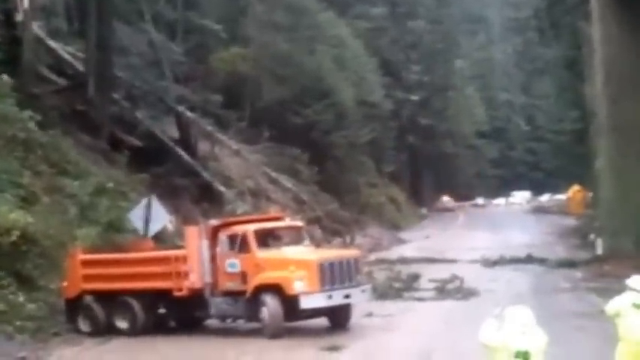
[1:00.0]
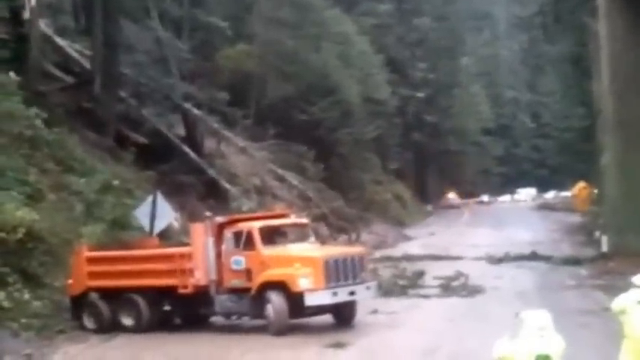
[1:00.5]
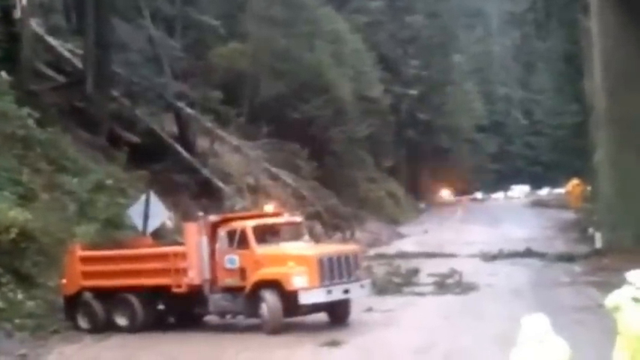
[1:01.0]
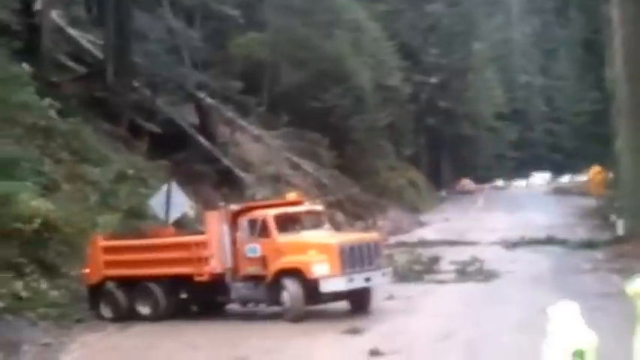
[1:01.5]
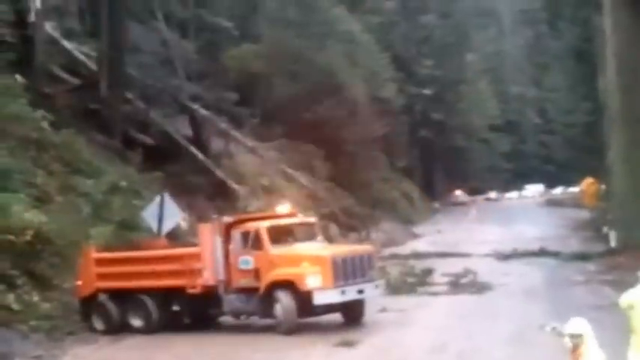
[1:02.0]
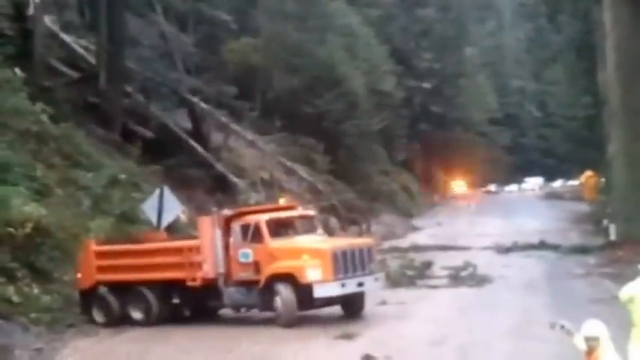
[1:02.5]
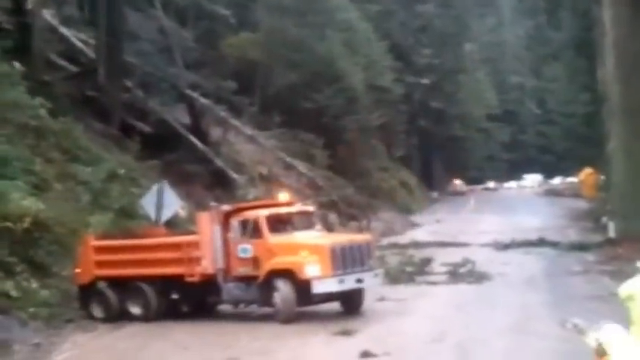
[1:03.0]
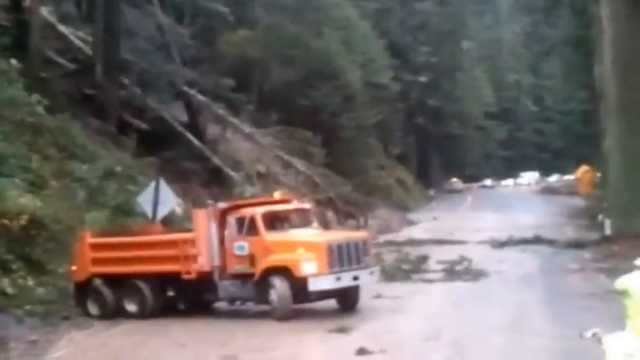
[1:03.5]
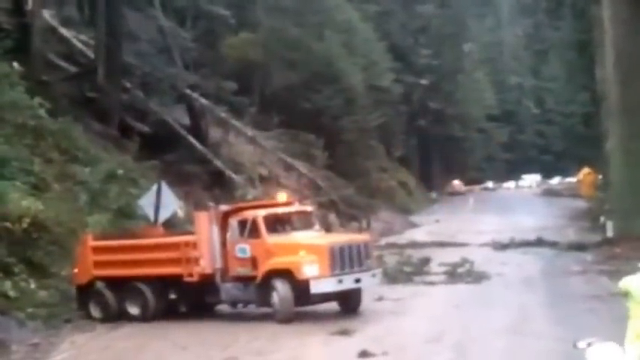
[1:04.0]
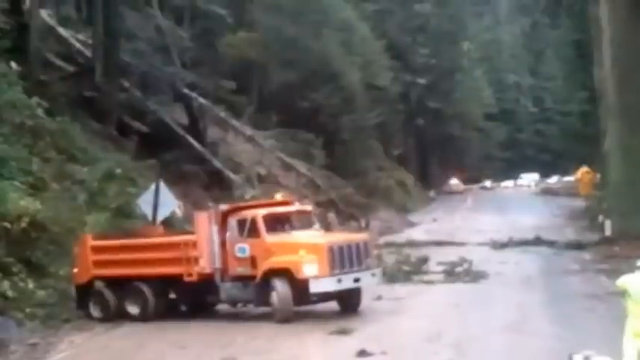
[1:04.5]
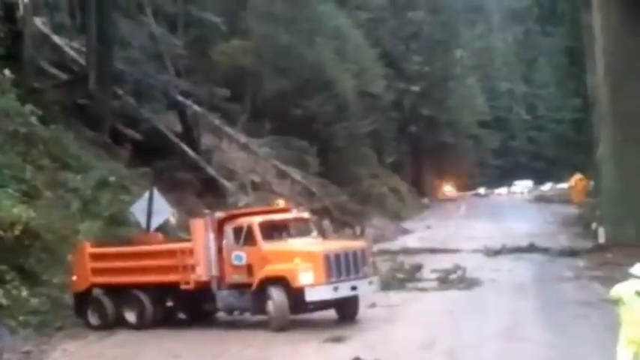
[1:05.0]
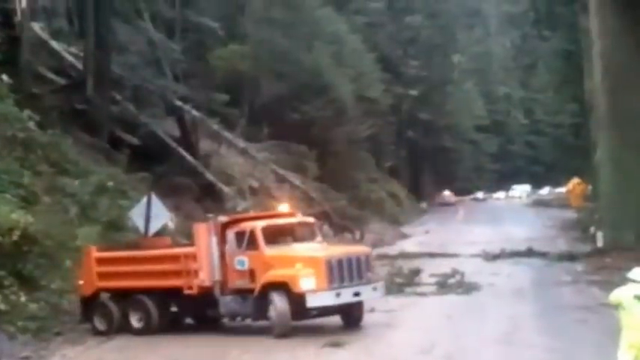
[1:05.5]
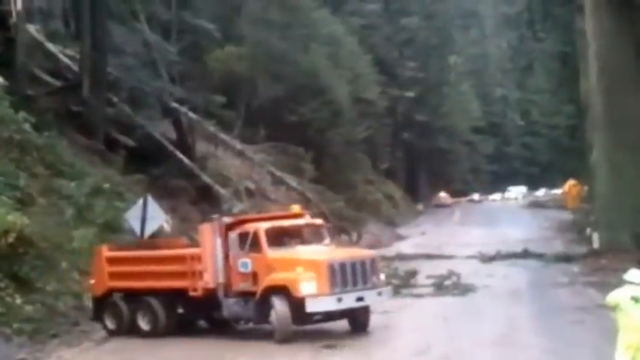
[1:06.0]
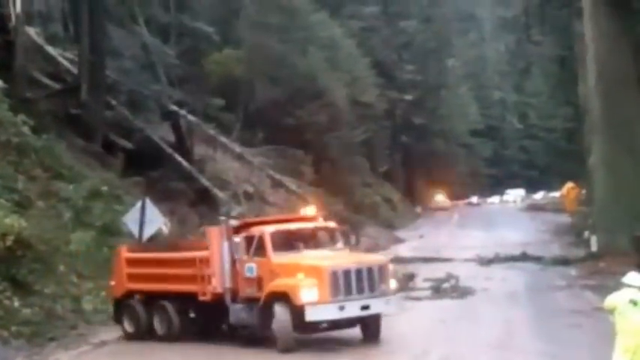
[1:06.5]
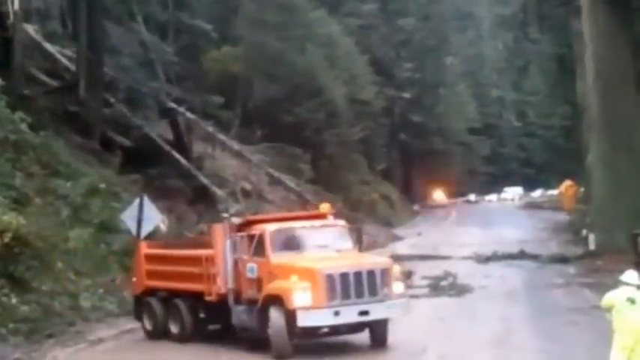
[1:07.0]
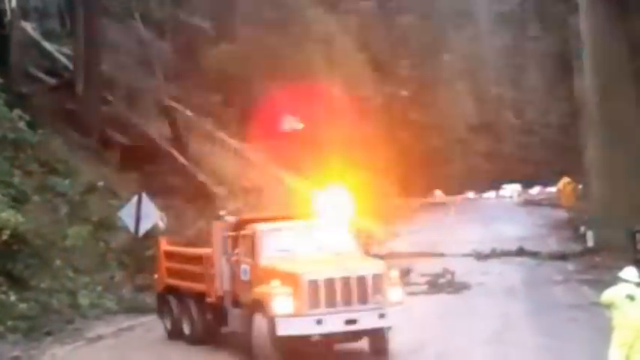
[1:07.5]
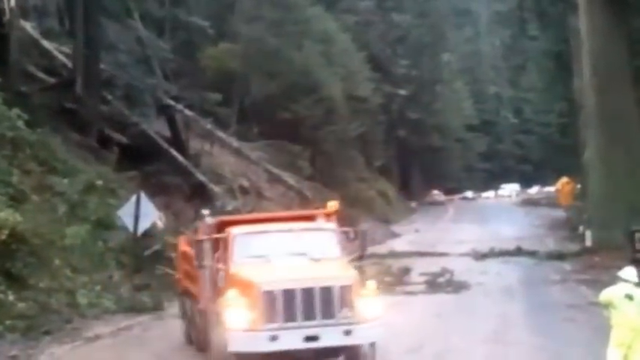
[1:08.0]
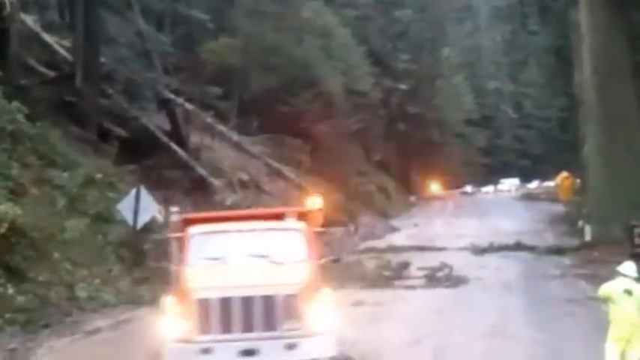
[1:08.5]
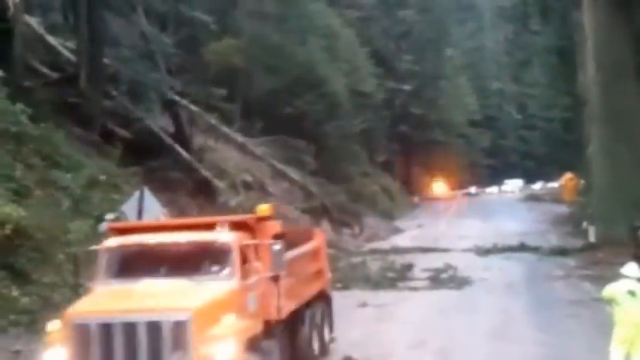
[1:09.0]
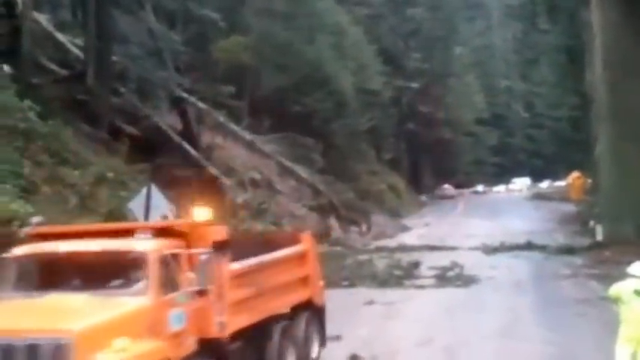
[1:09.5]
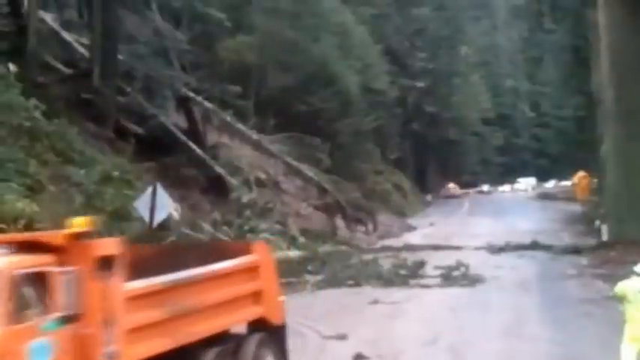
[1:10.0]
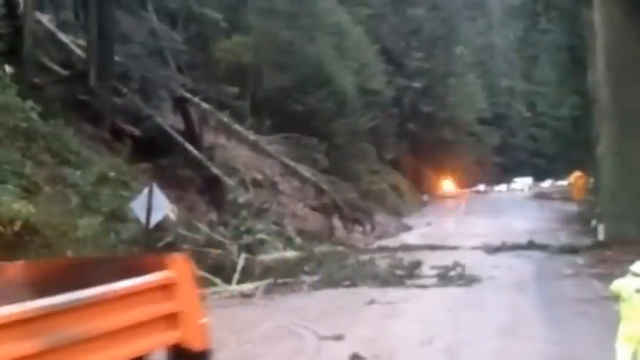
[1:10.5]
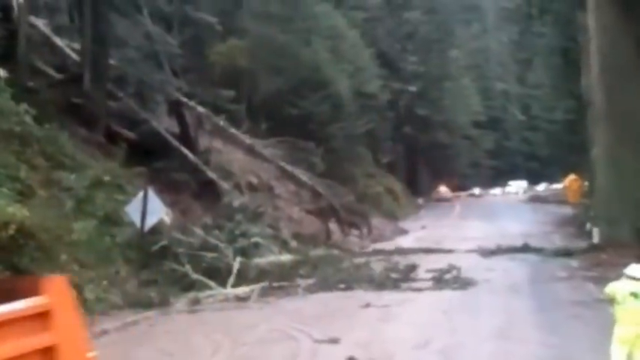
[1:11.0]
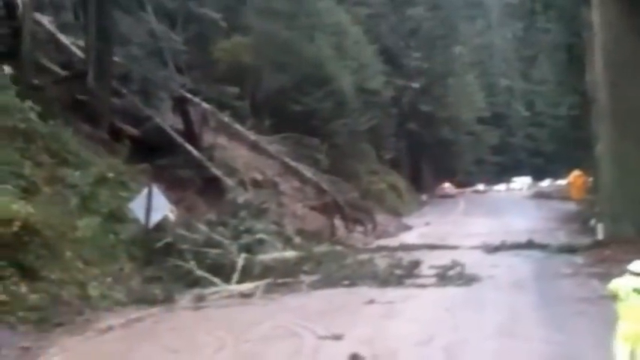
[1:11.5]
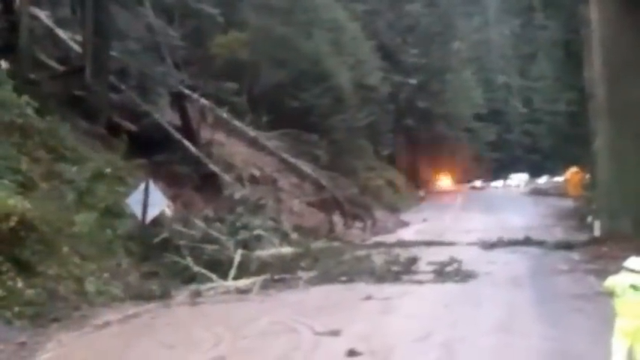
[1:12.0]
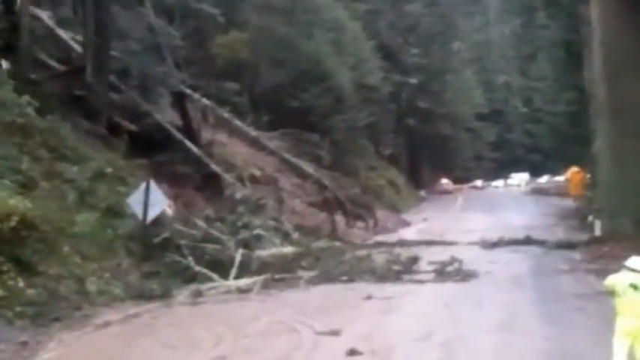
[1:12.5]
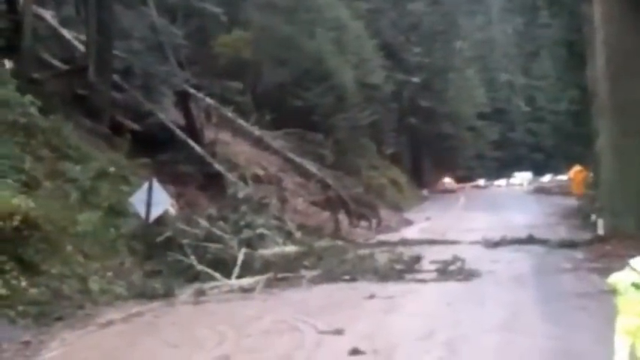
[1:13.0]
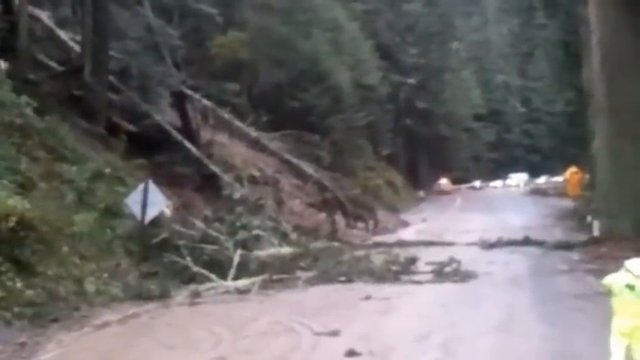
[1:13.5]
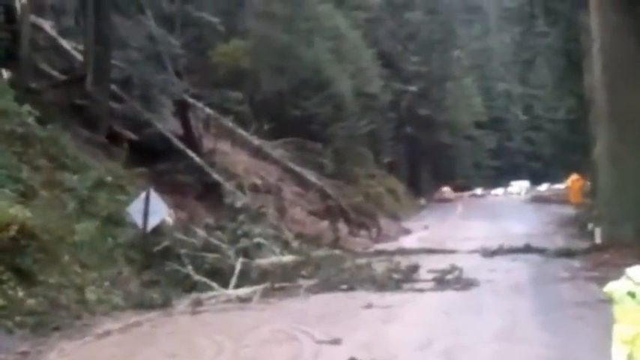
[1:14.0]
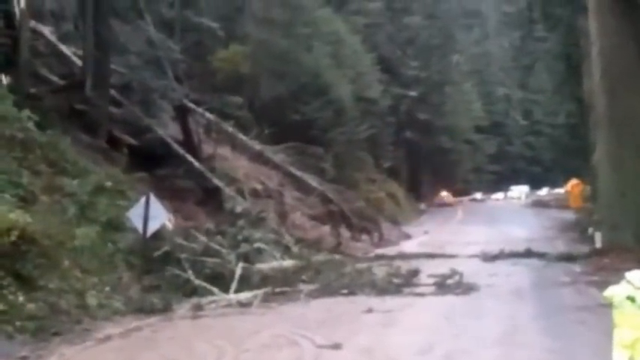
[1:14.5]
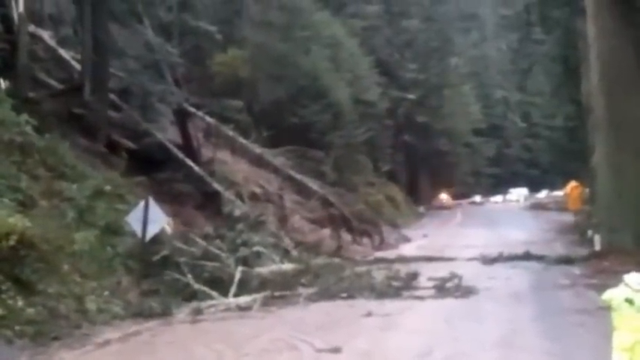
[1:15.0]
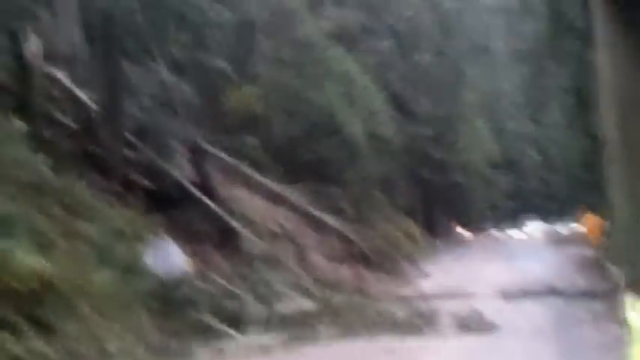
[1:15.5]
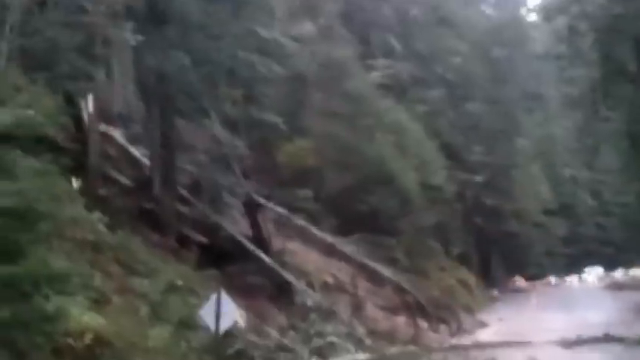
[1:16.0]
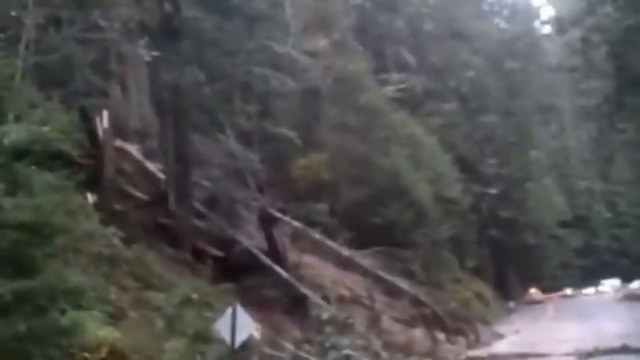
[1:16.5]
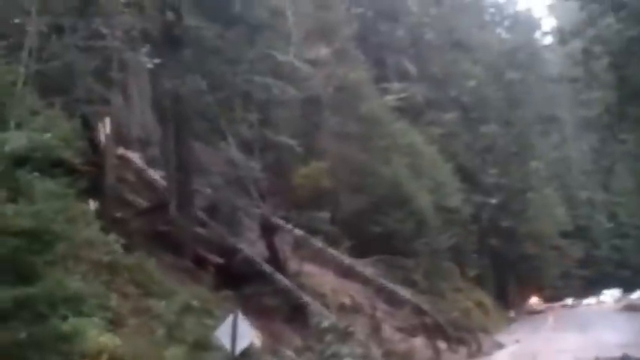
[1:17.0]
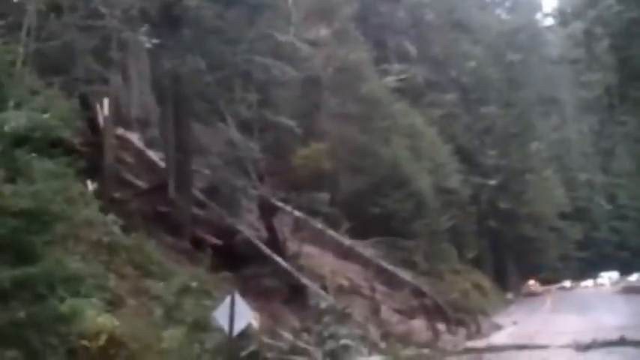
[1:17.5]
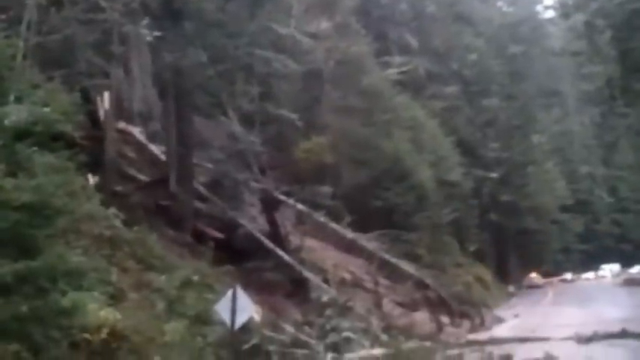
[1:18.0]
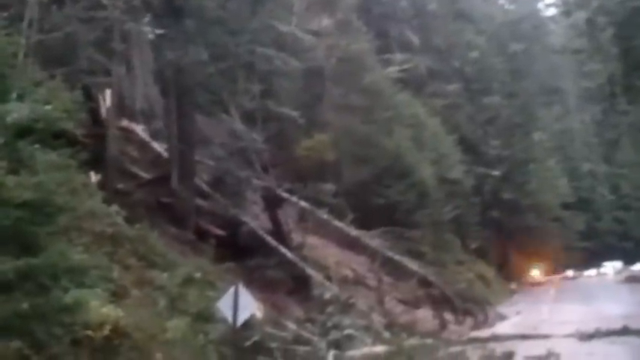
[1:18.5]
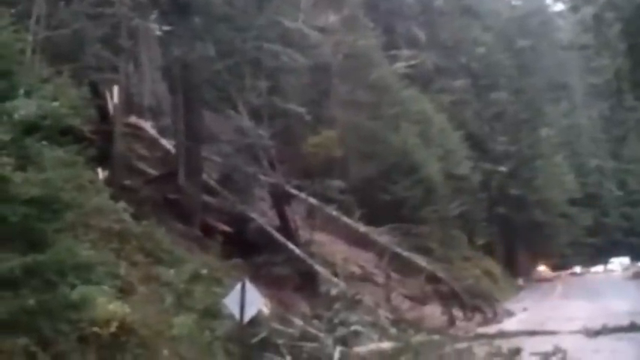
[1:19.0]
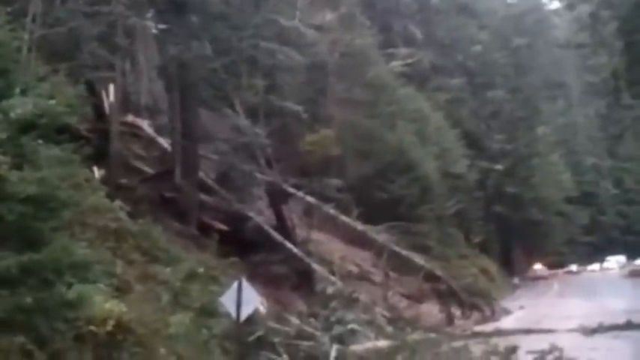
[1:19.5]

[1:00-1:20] A few cars are parked at the end of the road, and one car on the left of the road has a siren light on. A tree branch and a fallen tree are in the middle of the road. The parked orange truck with a sign in the back begins moving away from the scene, coming toward the camera. Toward the end, part of another tree in the background slides down the hill toward the road. A person in yellow protective equipment and a white protective hat stands in place with someone outside the frame, looks at the rest of the scene, then looks up at the surroundings.